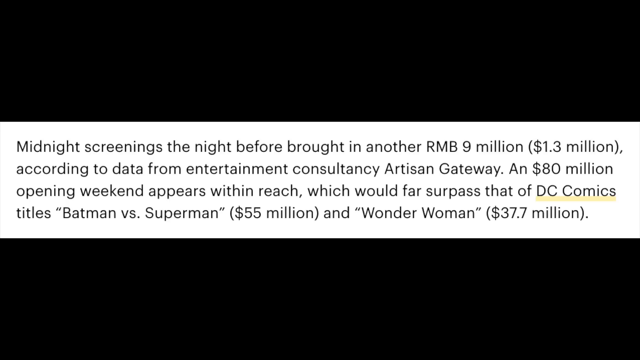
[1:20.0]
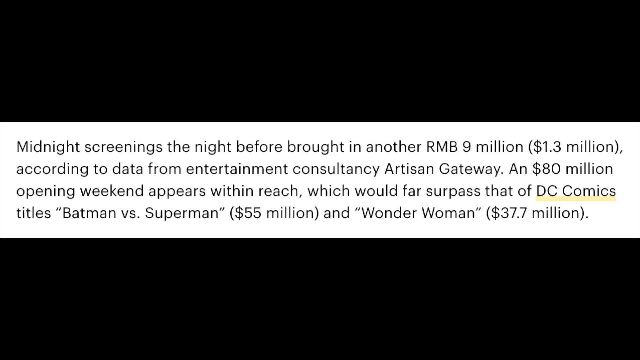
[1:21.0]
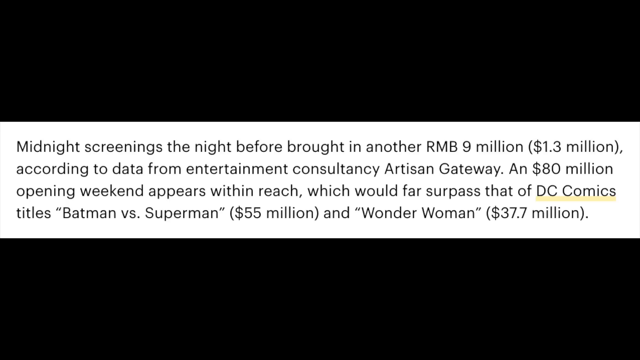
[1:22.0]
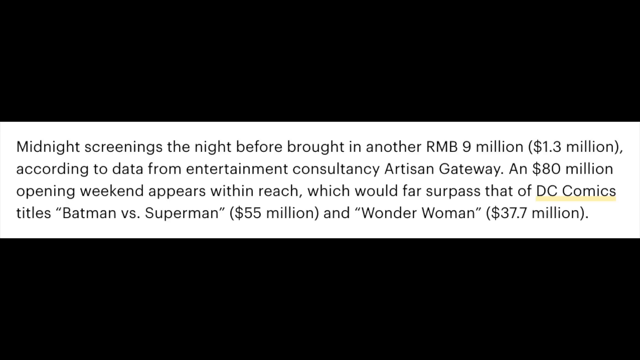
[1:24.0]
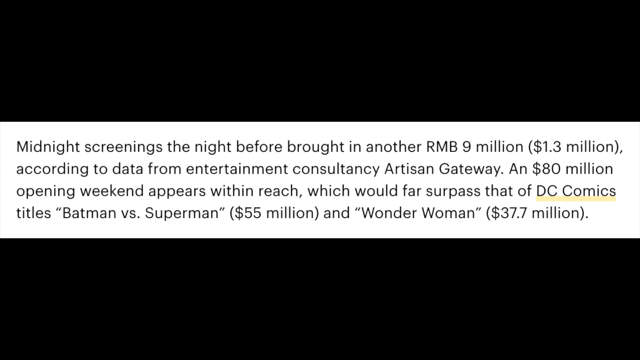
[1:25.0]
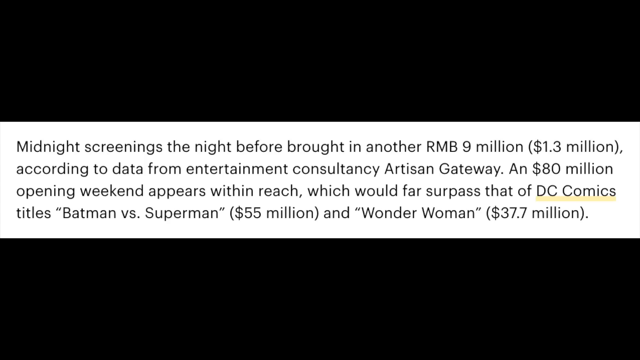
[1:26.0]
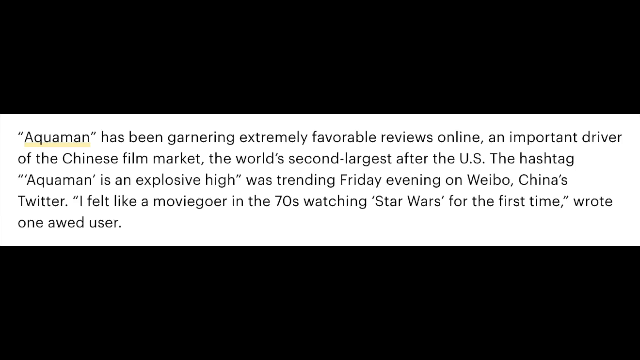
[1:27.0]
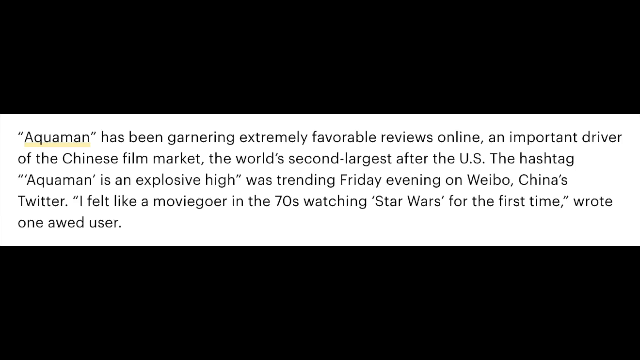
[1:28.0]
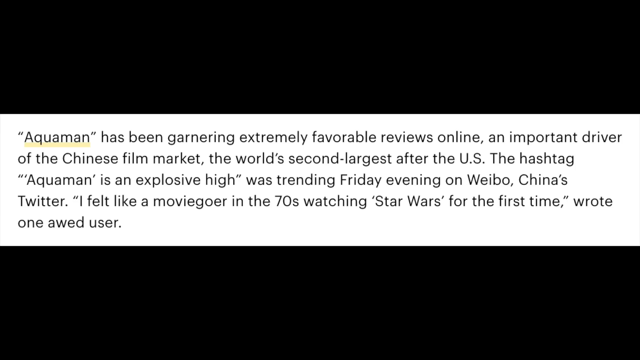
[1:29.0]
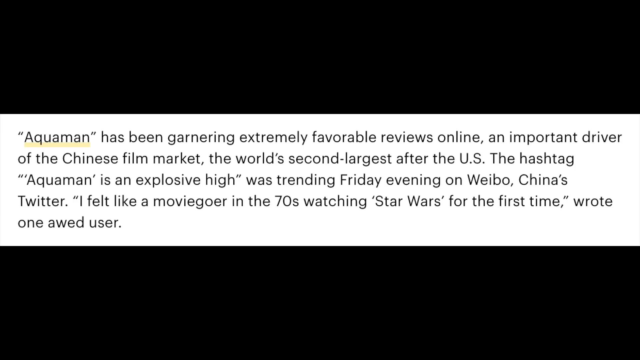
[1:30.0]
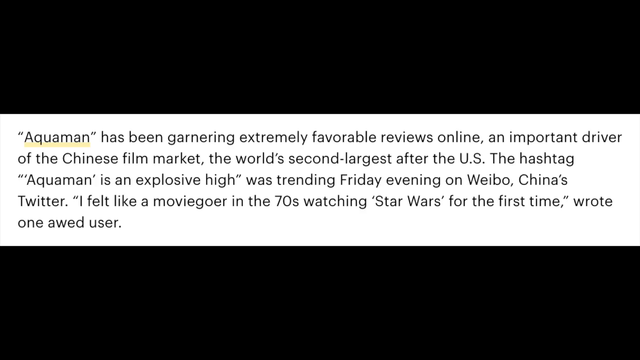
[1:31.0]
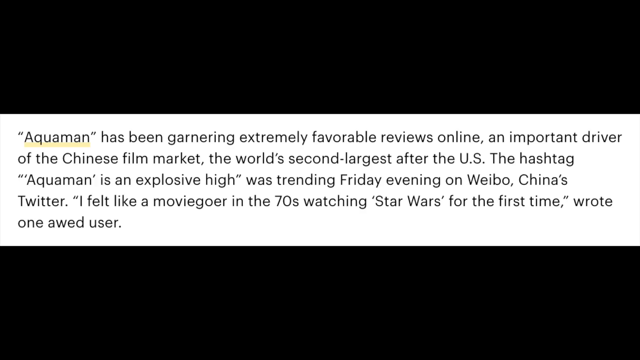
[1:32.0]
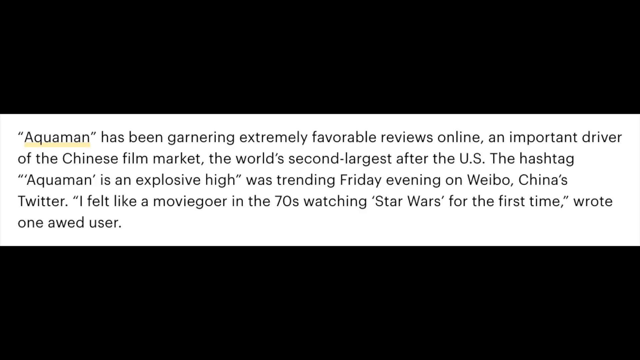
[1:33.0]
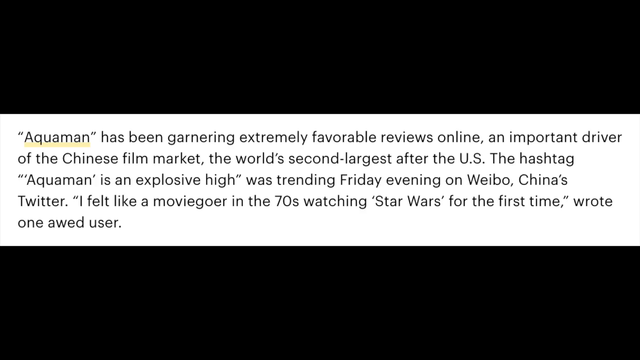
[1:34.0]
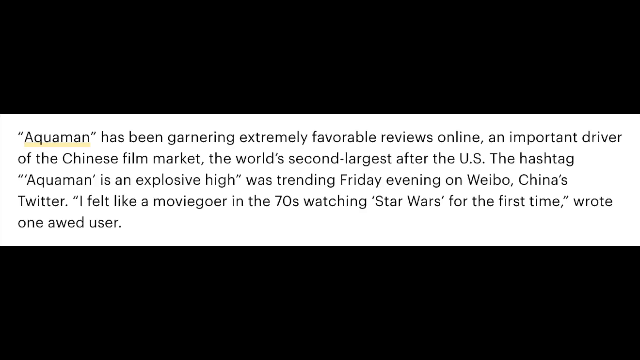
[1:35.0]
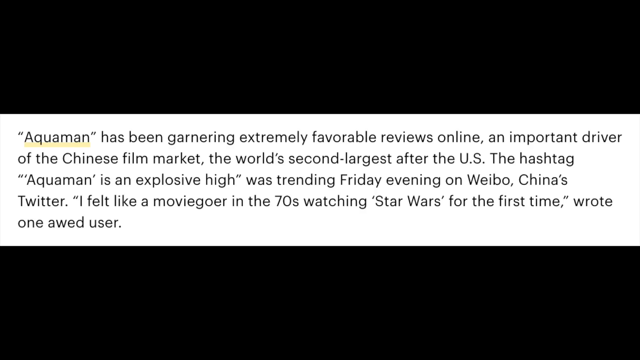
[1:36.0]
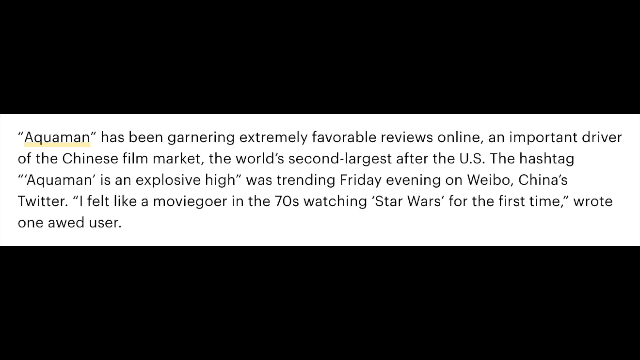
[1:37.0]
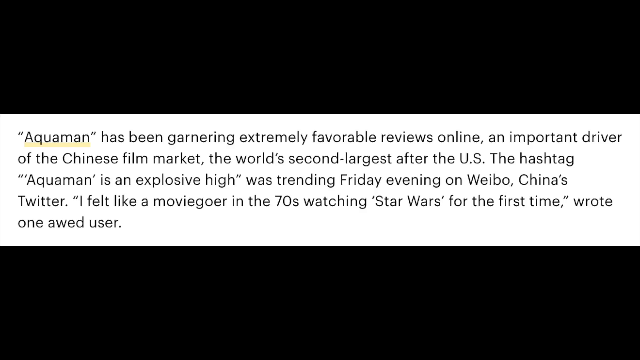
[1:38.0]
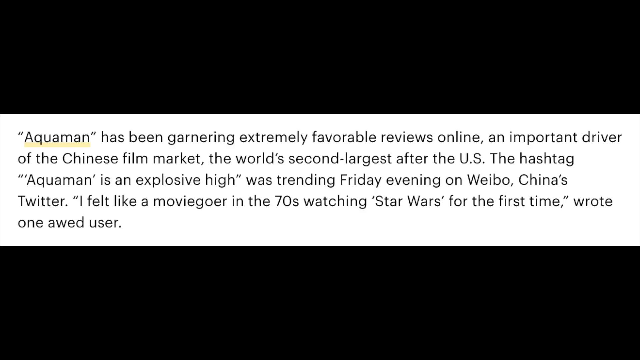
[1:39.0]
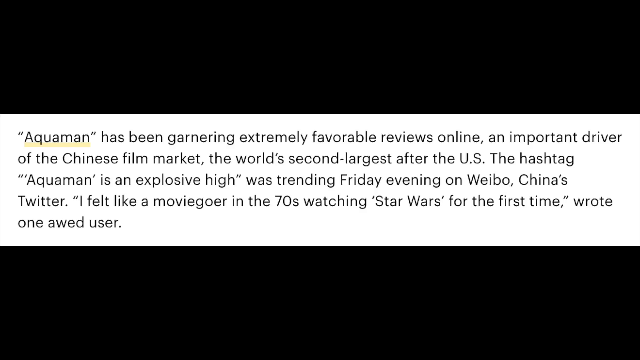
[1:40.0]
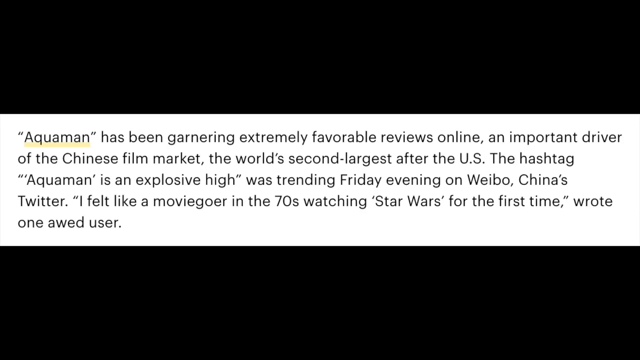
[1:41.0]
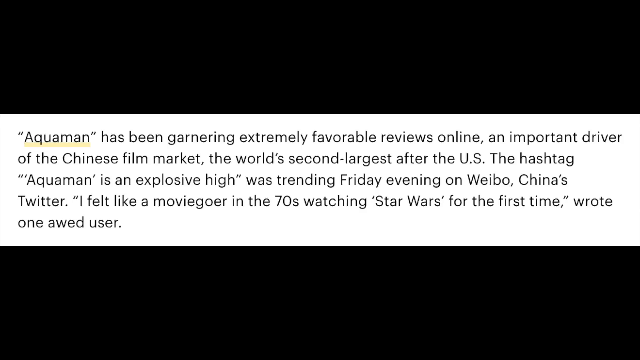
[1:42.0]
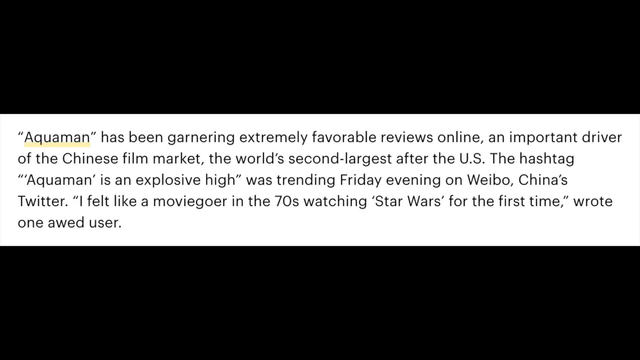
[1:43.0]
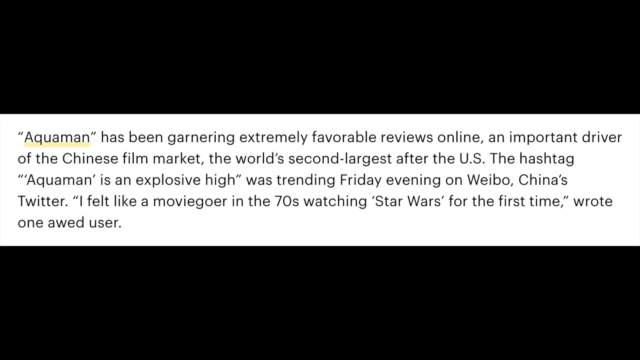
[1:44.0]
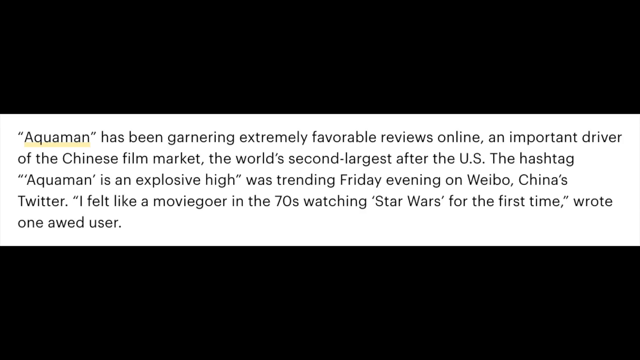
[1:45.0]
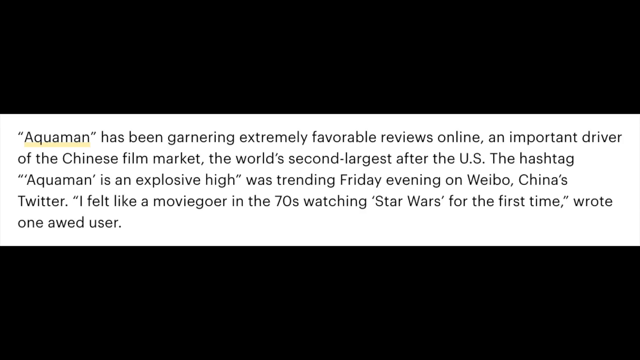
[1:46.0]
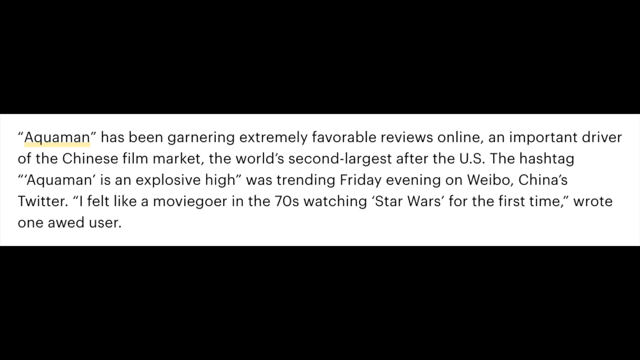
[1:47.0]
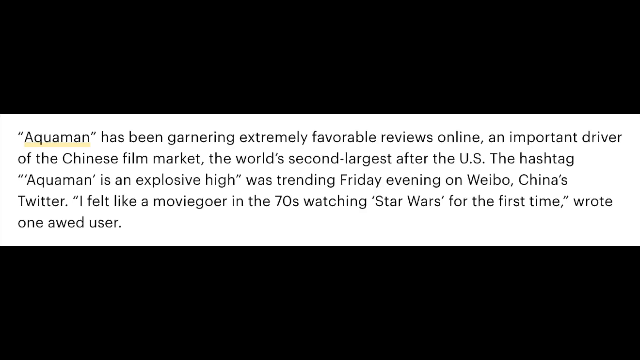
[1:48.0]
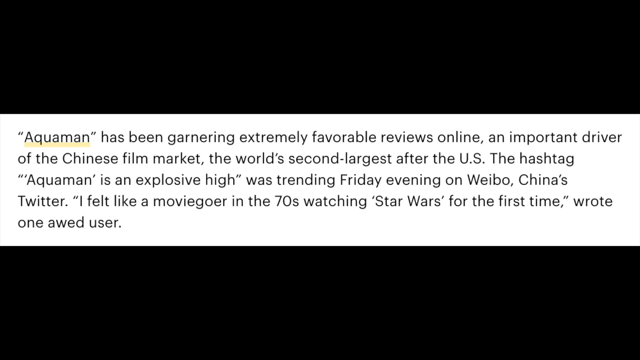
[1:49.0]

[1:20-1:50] The news article continues, showing only text. It says "midnight screenings the night before brought in another RMB 9 million just $1.3 million U.S. according to data from entertainment consultancy" and "an $80 million dollar opening weekend appears within reach which would far surpass that of DC Comics titles Batman vs. Superman which was $55 million and Wonder Woman which was $37.7 million." Further text reads "Aquaman has been garnering extremely favorable reviews online, an important driver of the Chinese film market, the world's second largest after the U.S." and "#Aquaman is an explosive high was trending Friday evening on Weibo, China's Twitter." It also quotes a user: "I felt like a moviegoer in the 70s watching Star Wars for the first time."